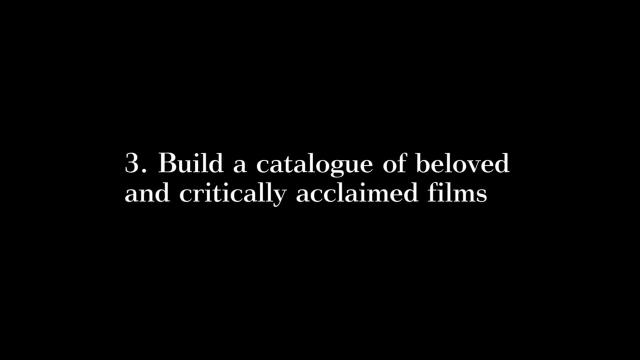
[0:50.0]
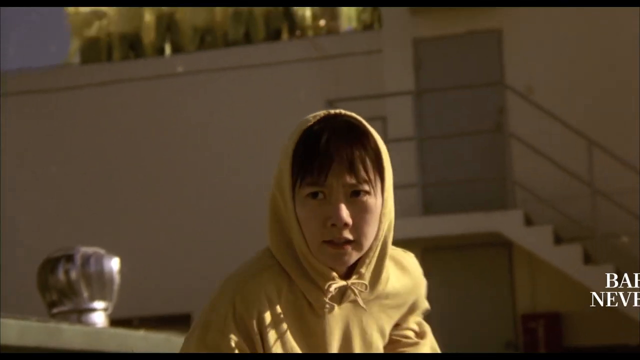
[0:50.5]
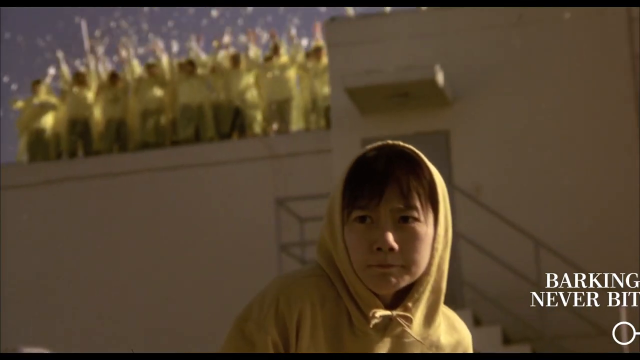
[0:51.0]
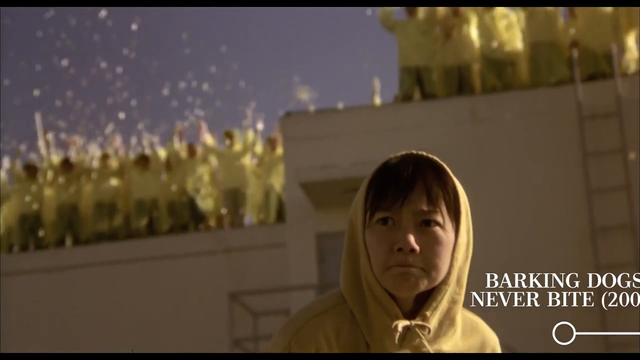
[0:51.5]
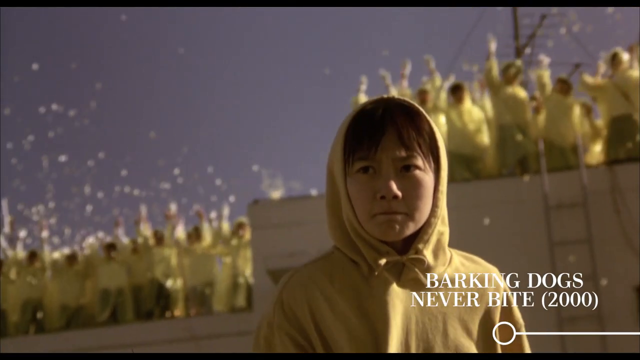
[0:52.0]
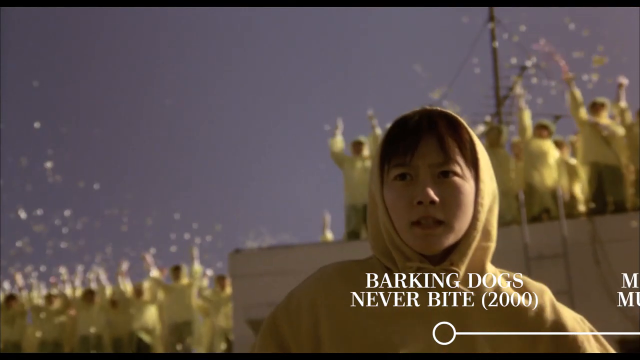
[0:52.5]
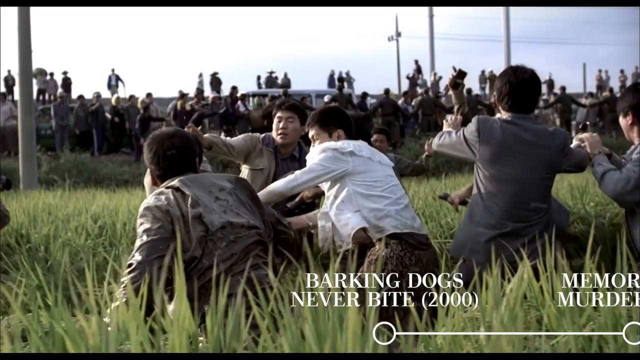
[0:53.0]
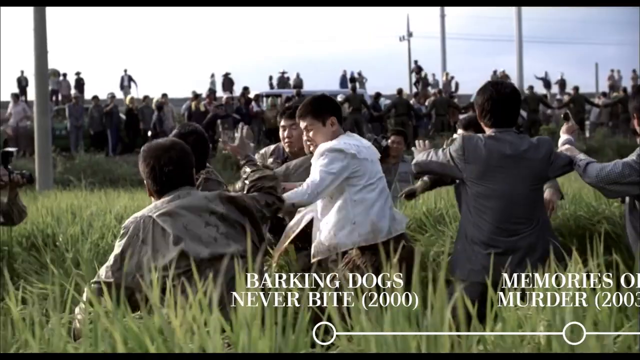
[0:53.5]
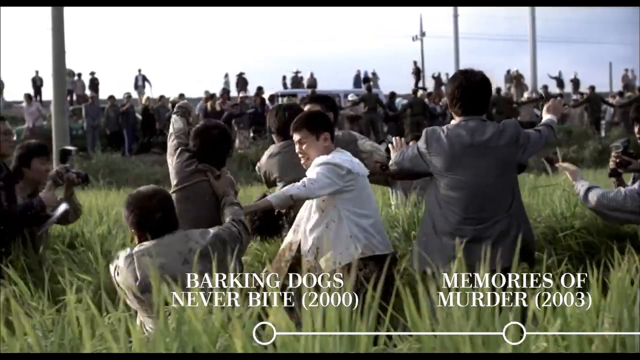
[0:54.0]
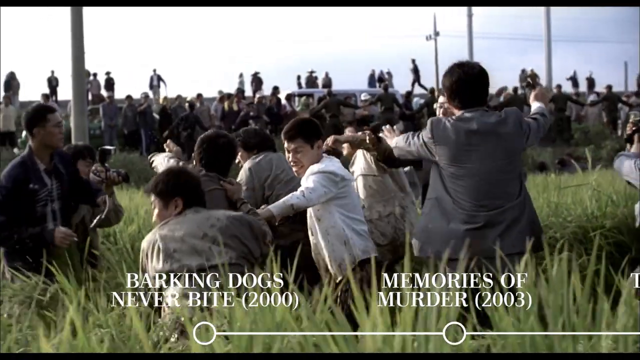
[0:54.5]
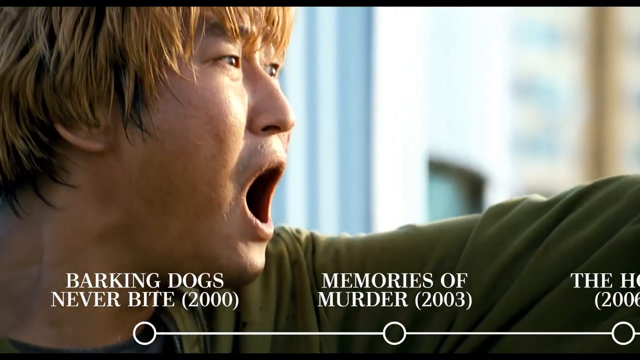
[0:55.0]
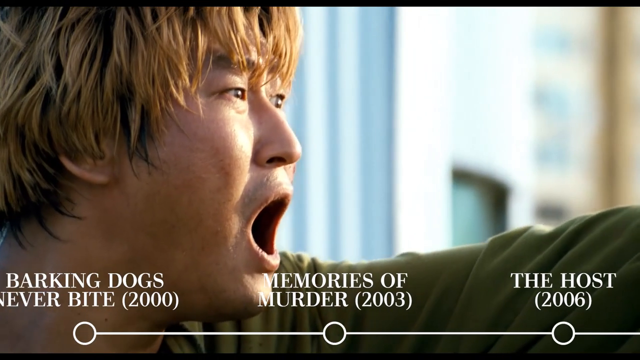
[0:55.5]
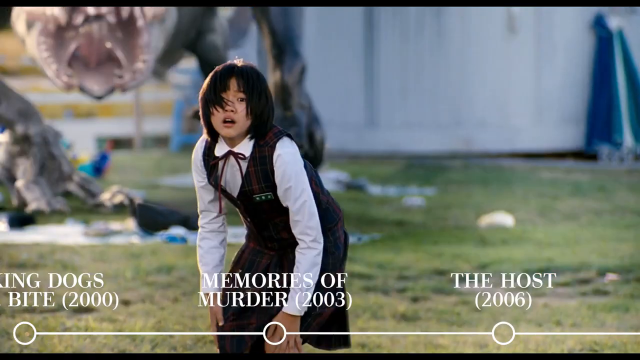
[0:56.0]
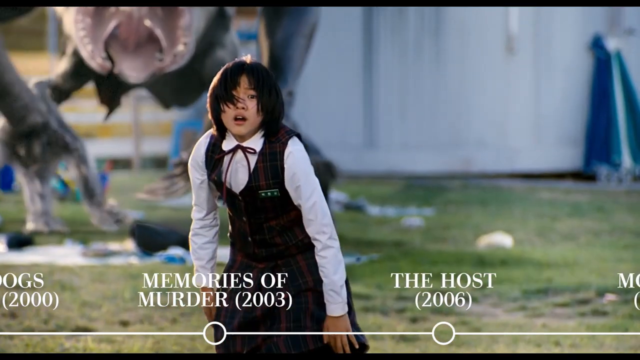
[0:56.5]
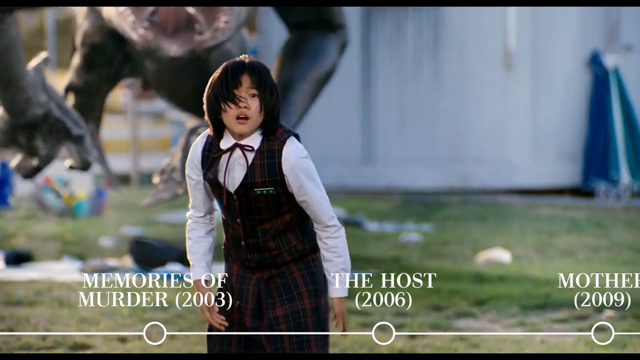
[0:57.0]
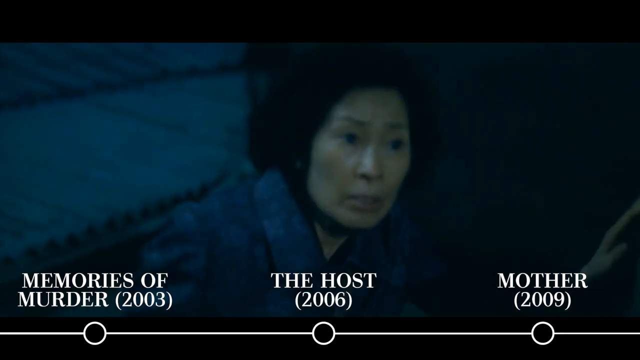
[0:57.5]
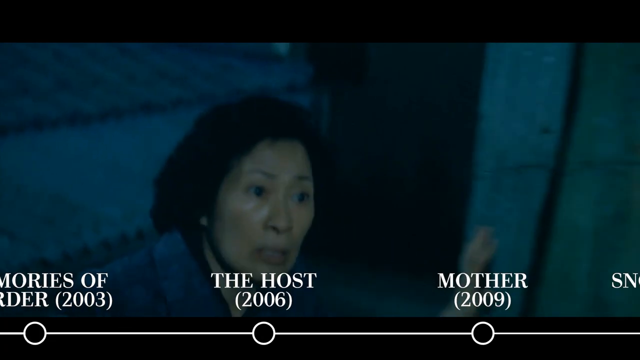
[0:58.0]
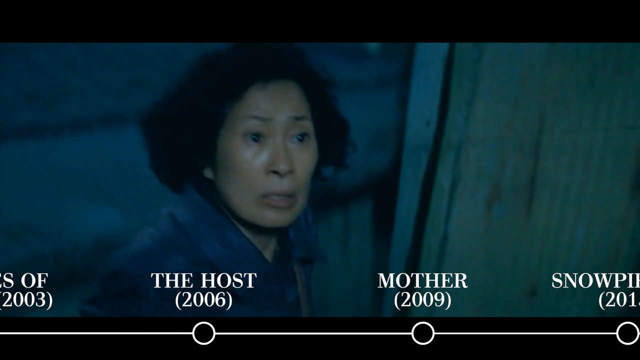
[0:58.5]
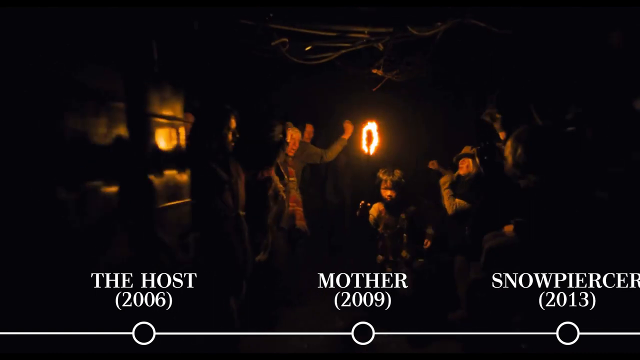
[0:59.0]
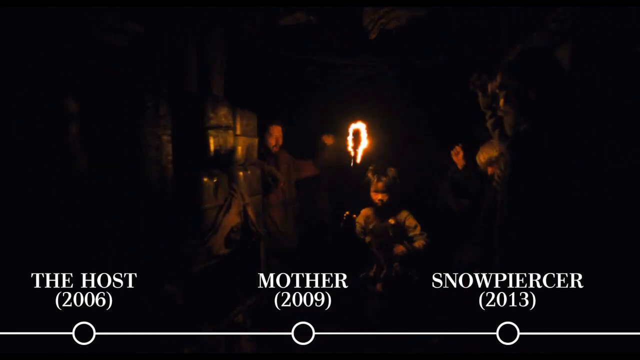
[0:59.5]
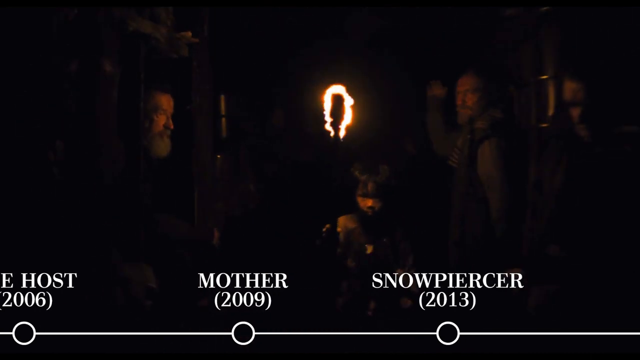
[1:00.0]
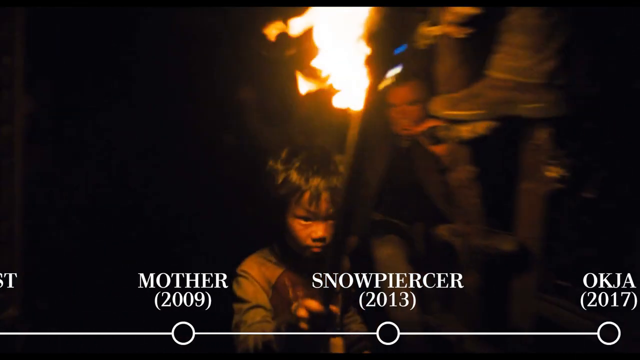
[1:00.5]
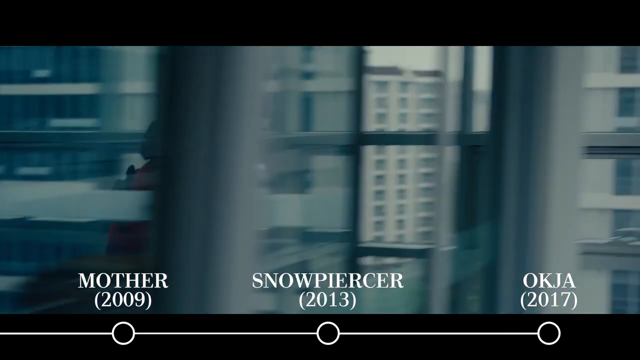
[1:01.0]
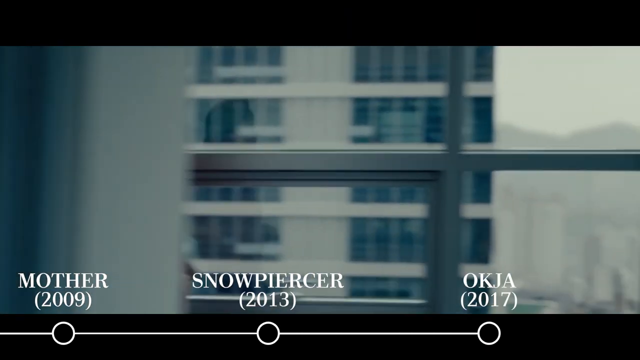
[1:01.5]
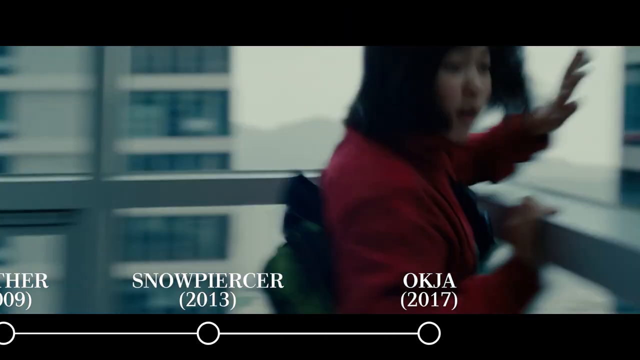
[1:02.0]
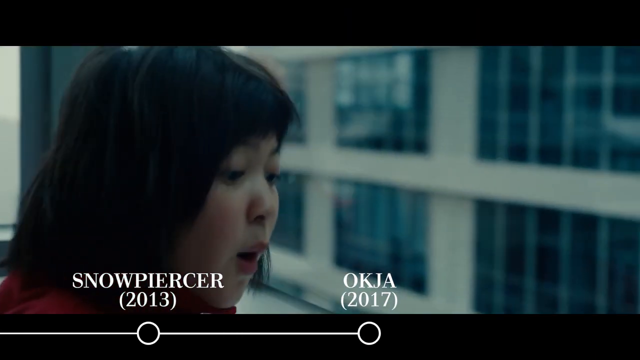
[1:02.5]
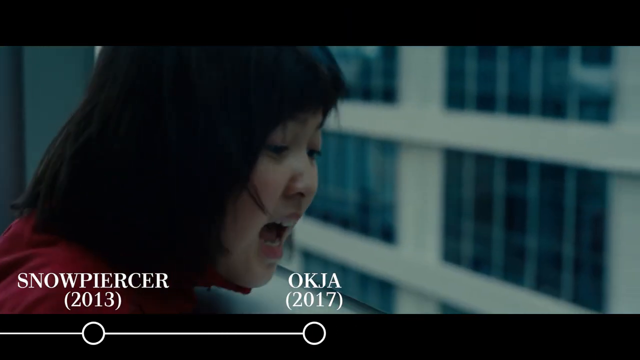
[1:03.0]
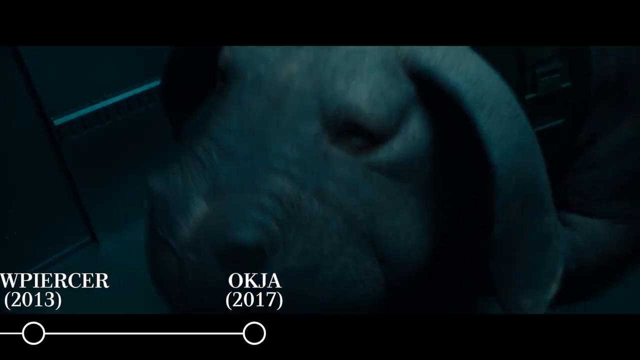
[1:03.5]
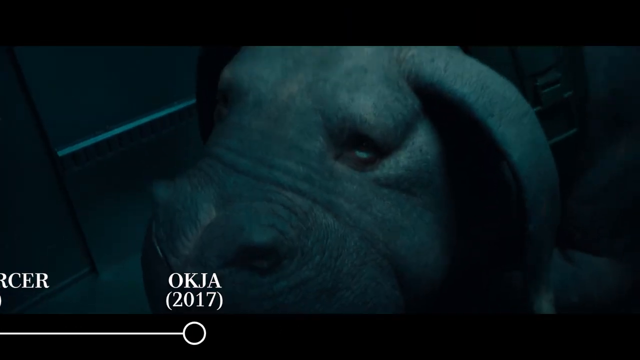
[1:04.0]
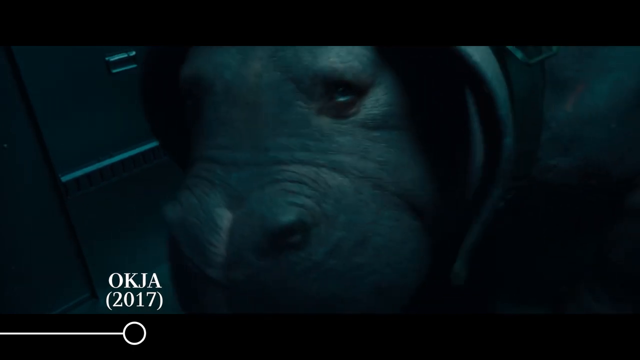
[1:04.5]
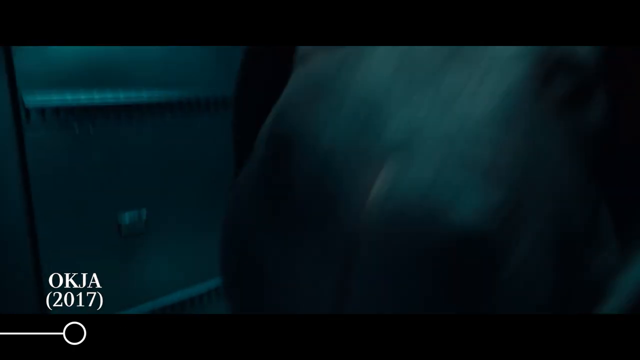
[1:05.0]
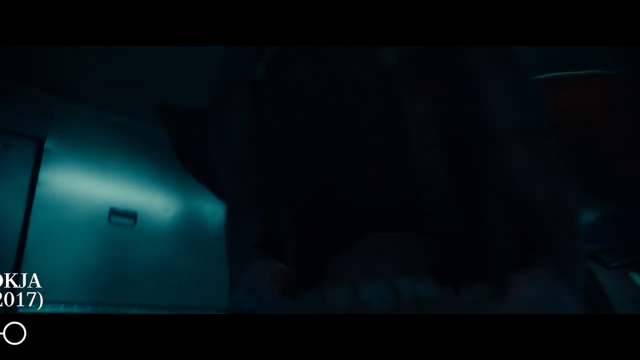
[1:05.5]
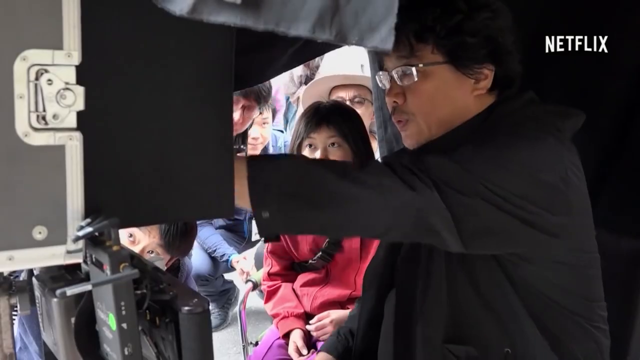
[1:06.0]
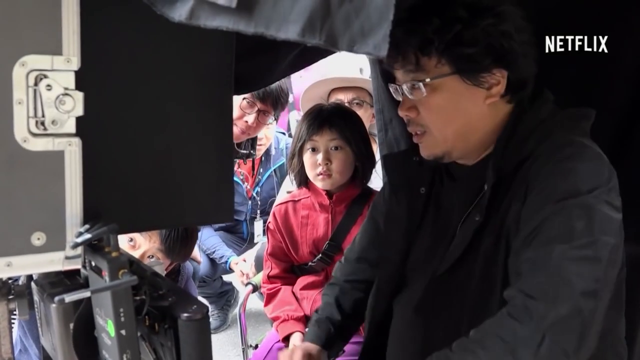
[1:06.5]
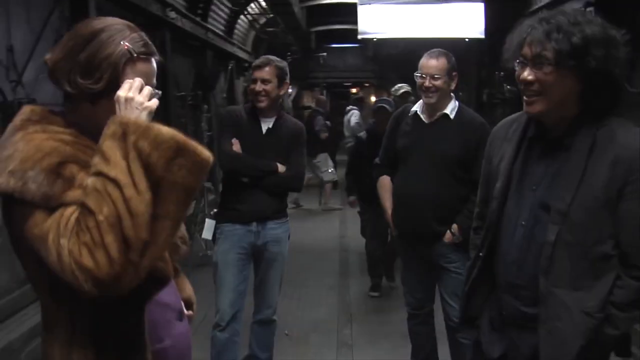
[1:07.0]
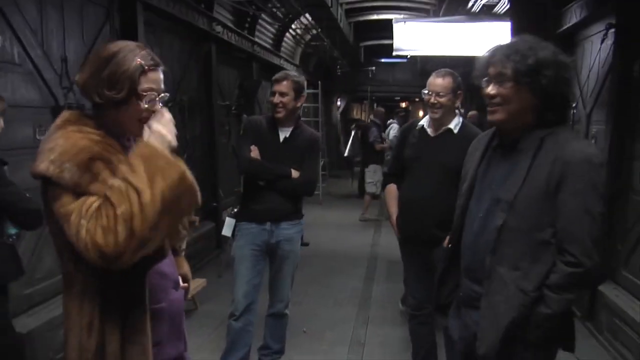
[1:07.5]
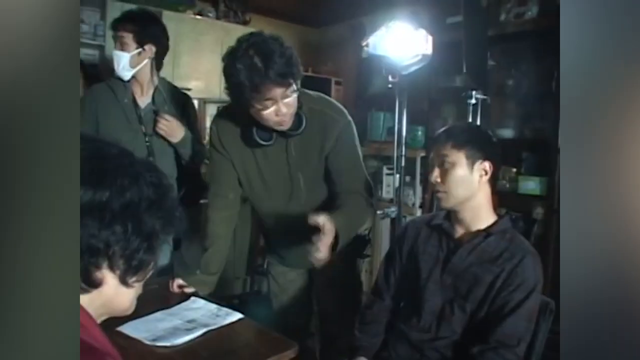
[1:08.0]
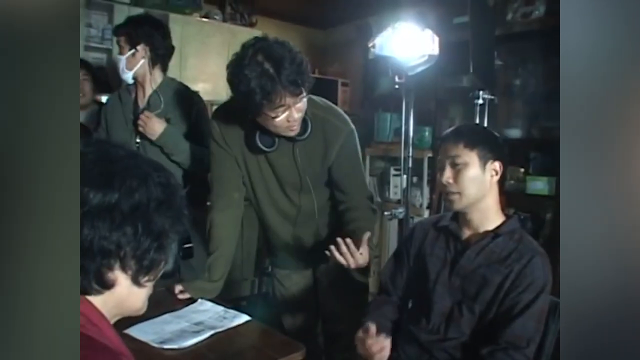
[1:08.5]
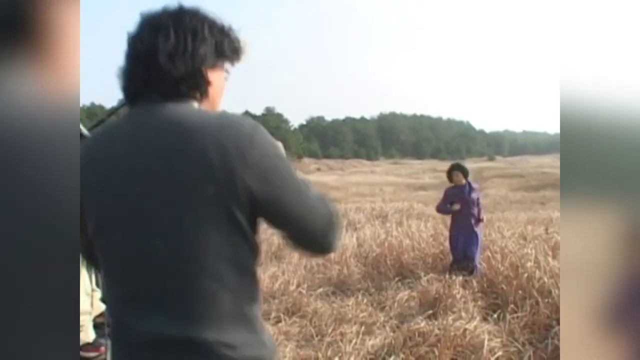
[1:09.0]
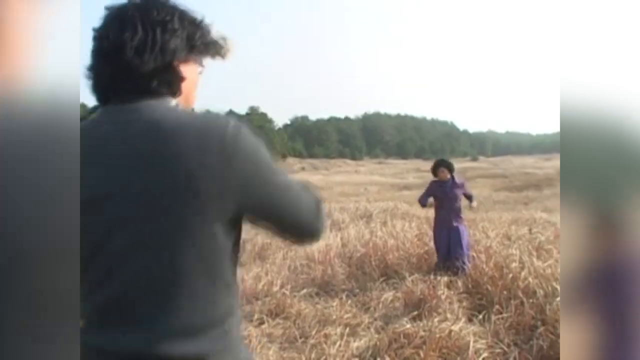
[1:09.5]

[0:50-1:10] On a black background, the number 3 is written along with text beginning "build a catalogue of beloved and critical". Short preview clips follow: people cheer while others seem to struggle. In another, someone seems to be shouting in fear at a woman in front of him, with an alien creature behind her that appears to be about to harm her; he seems unable to save her because she is far from him. The person wears a black dress with a white shirt and seems to be a woman aged 24 to 27. There seem to be a lot of creatures, and people are scared for their lives.